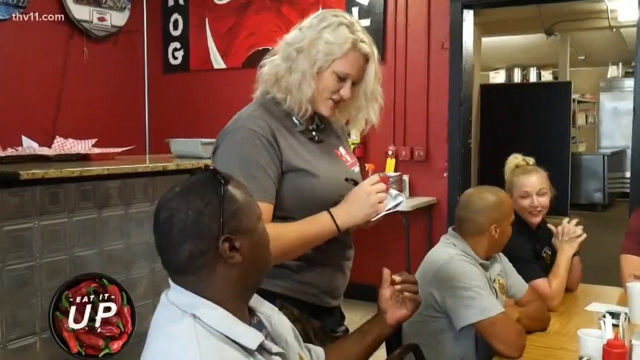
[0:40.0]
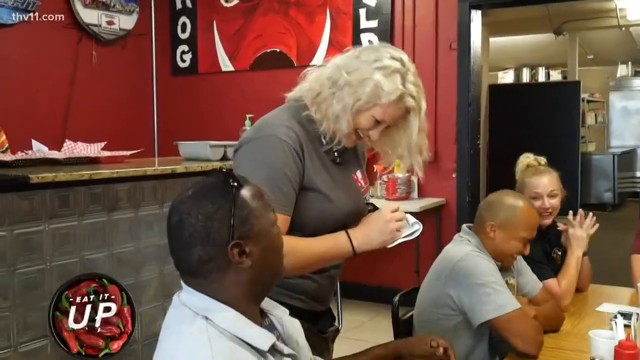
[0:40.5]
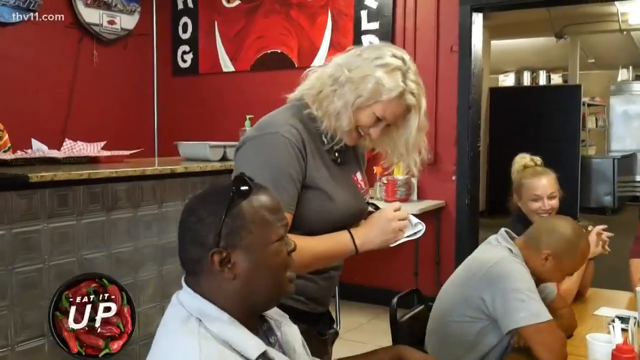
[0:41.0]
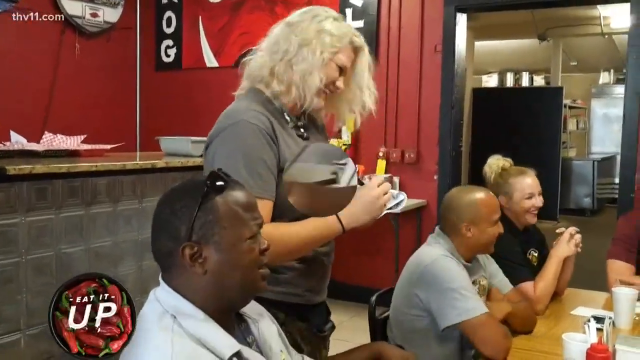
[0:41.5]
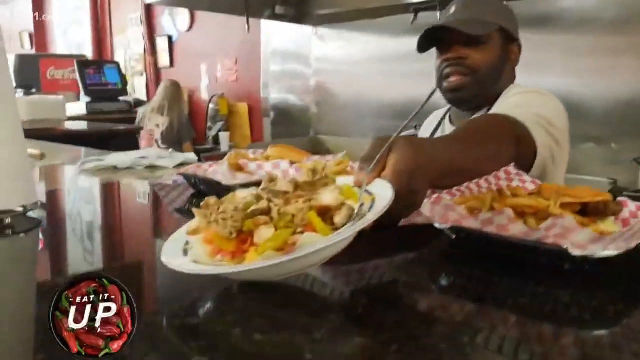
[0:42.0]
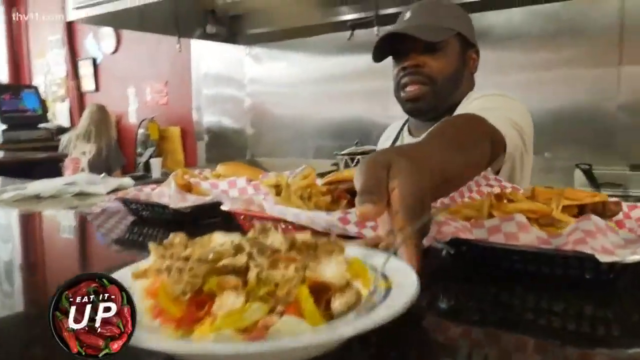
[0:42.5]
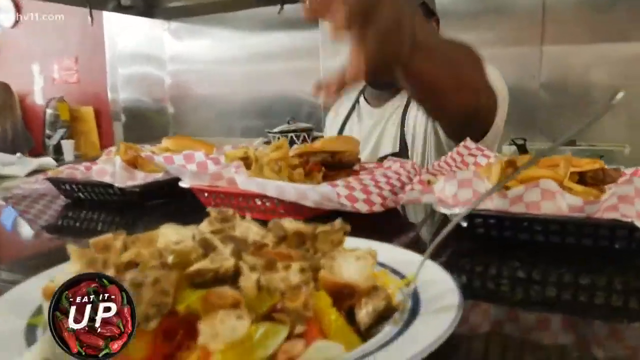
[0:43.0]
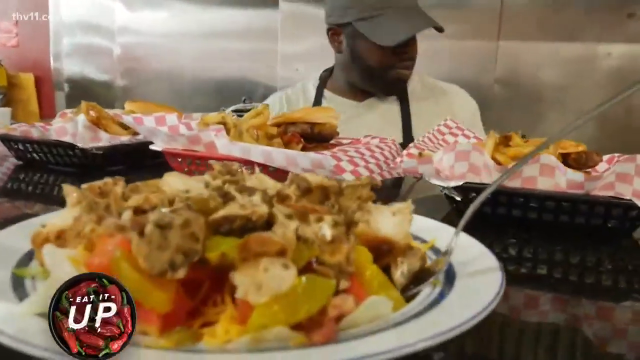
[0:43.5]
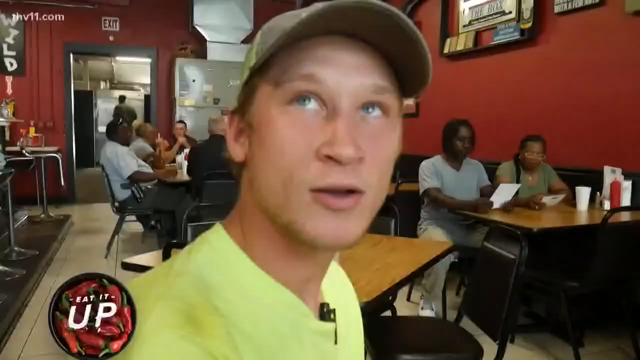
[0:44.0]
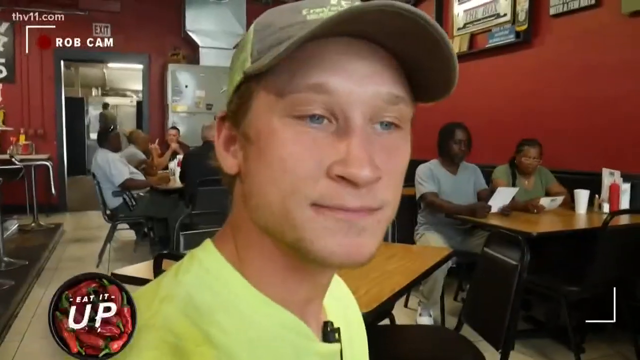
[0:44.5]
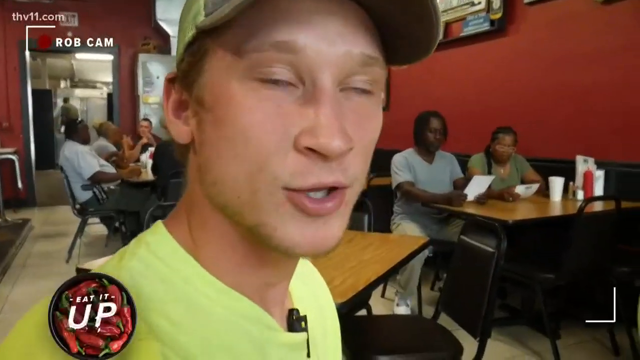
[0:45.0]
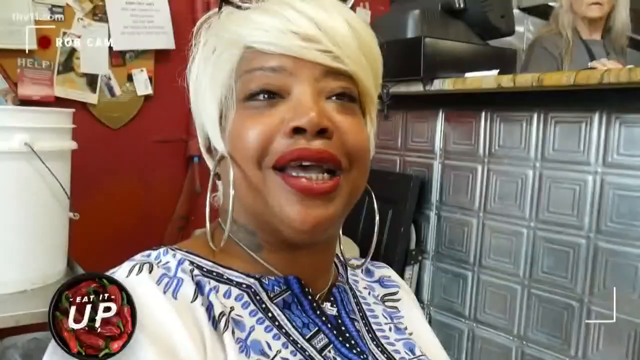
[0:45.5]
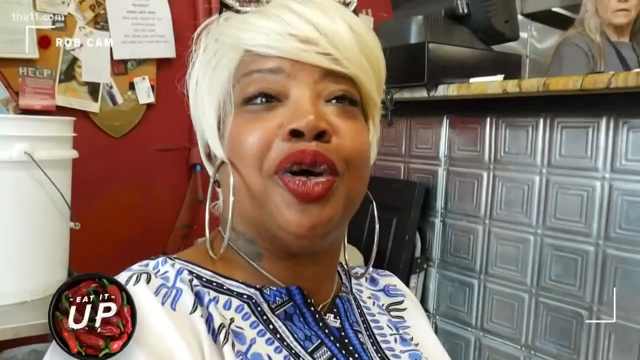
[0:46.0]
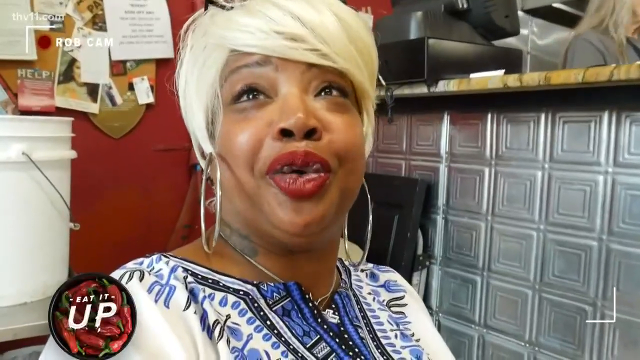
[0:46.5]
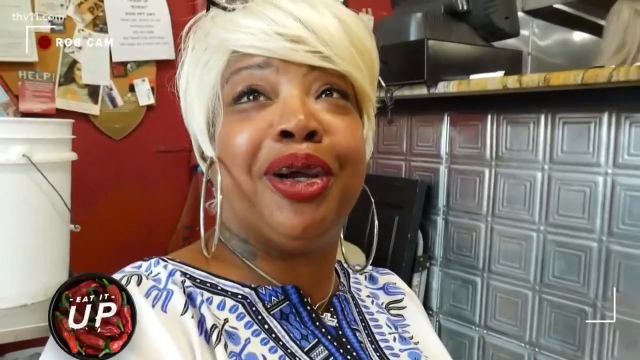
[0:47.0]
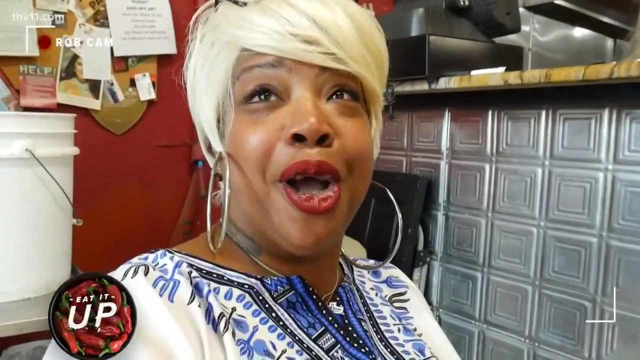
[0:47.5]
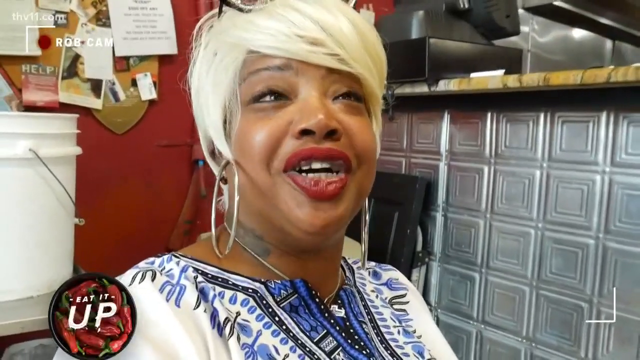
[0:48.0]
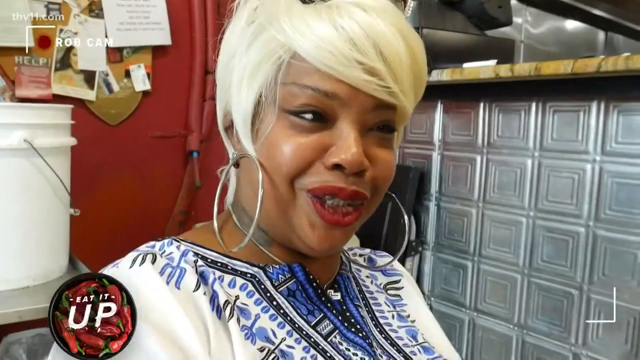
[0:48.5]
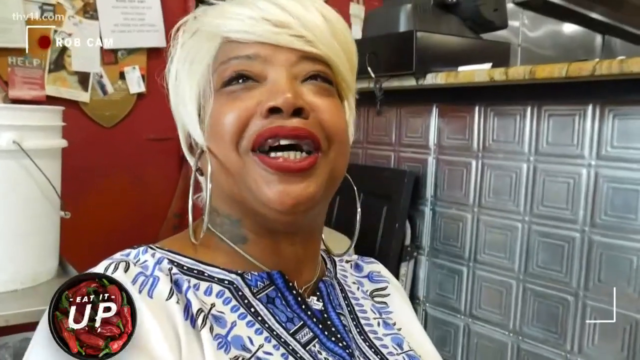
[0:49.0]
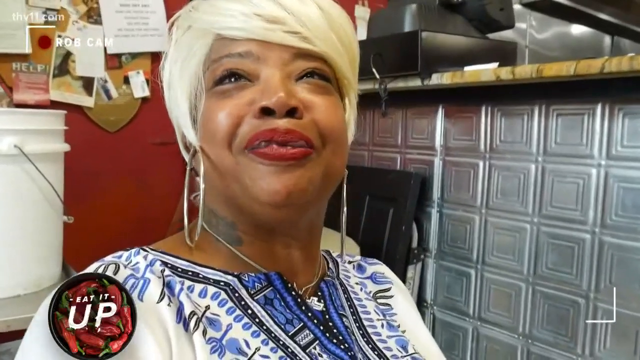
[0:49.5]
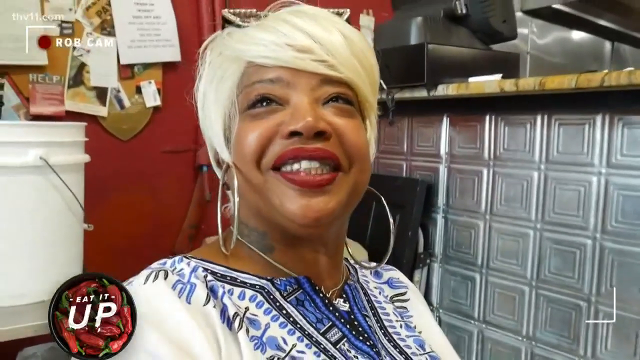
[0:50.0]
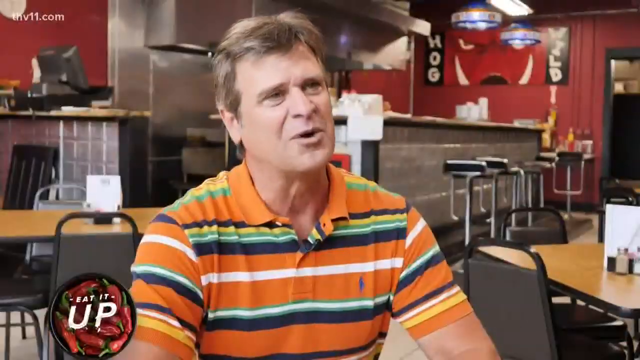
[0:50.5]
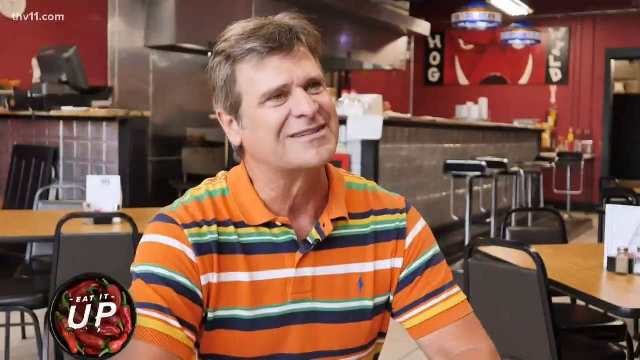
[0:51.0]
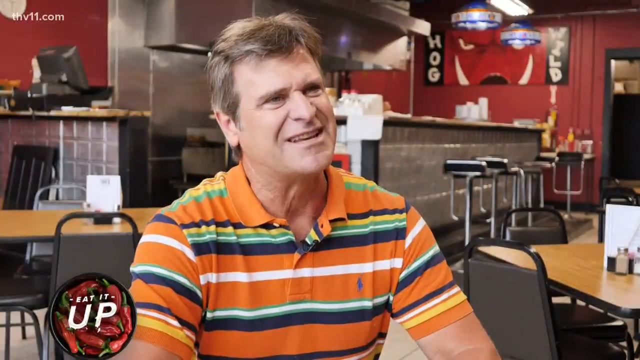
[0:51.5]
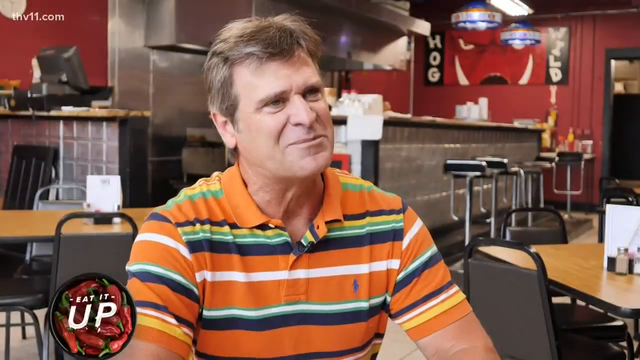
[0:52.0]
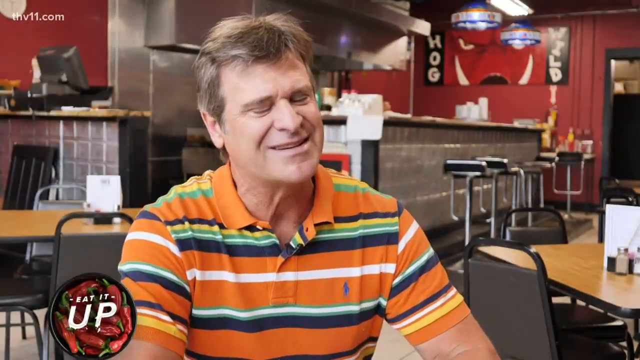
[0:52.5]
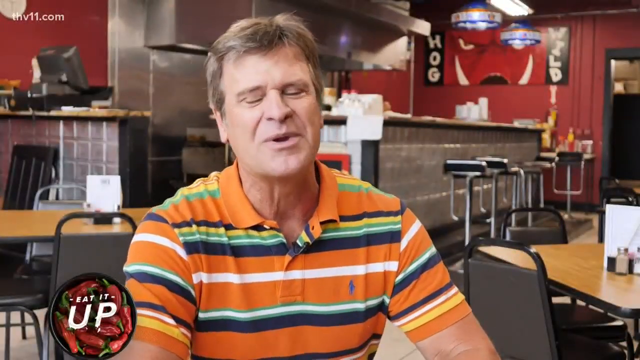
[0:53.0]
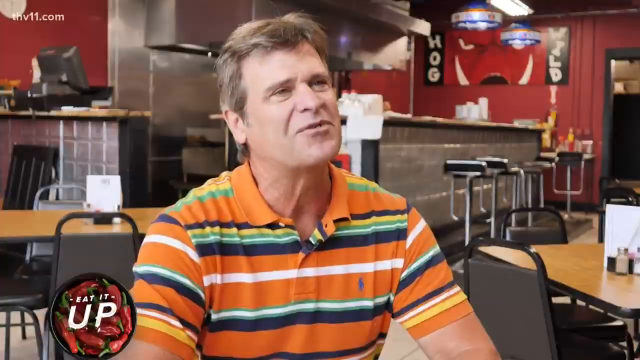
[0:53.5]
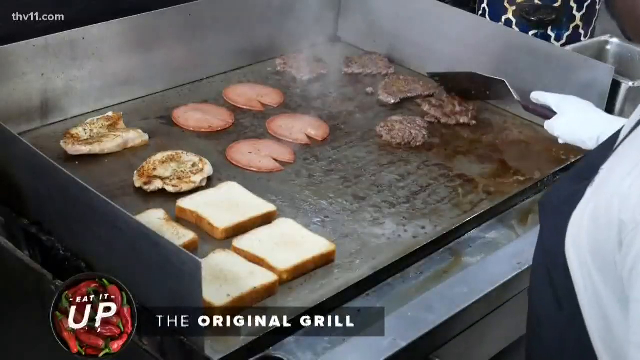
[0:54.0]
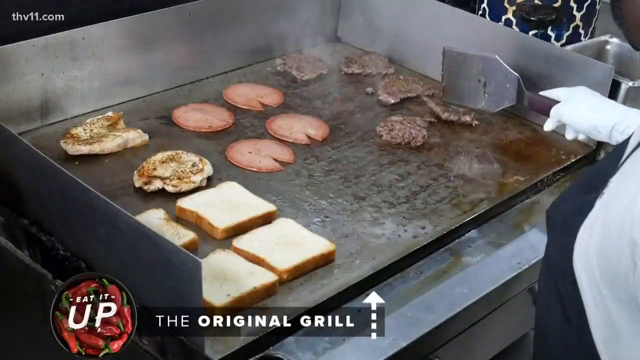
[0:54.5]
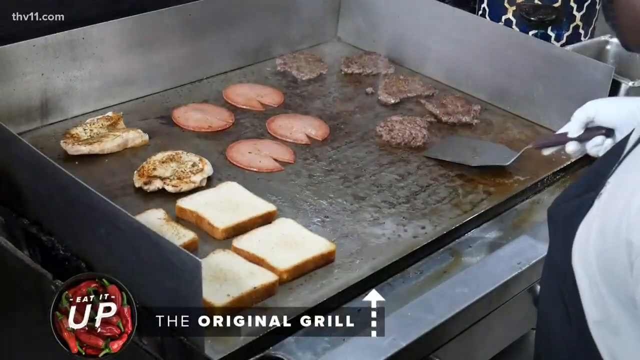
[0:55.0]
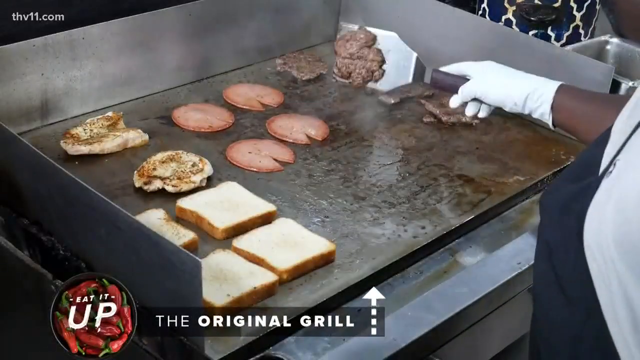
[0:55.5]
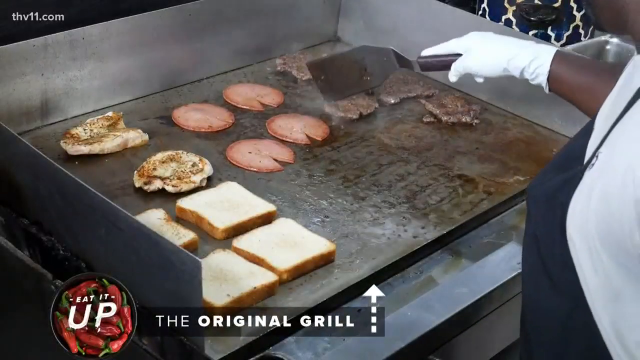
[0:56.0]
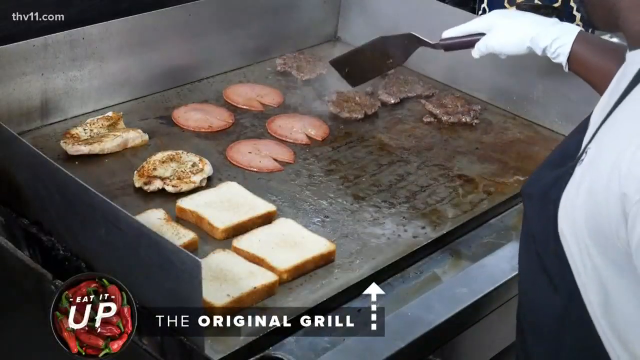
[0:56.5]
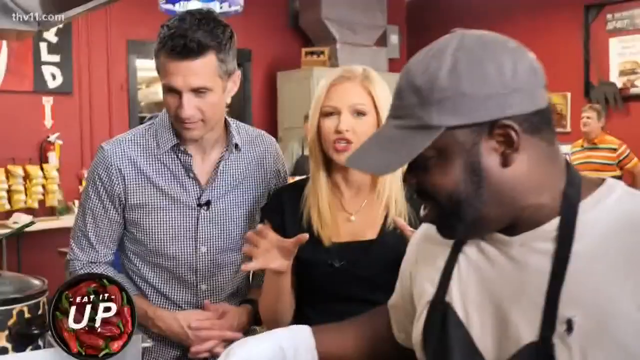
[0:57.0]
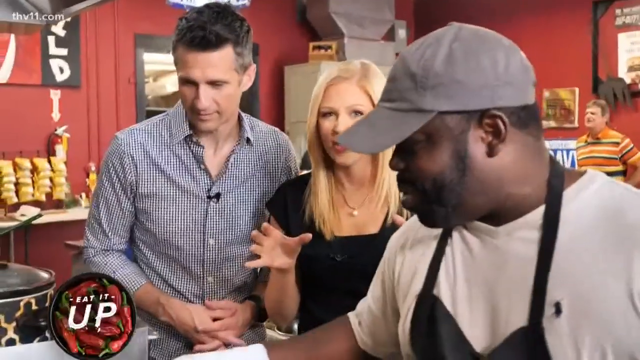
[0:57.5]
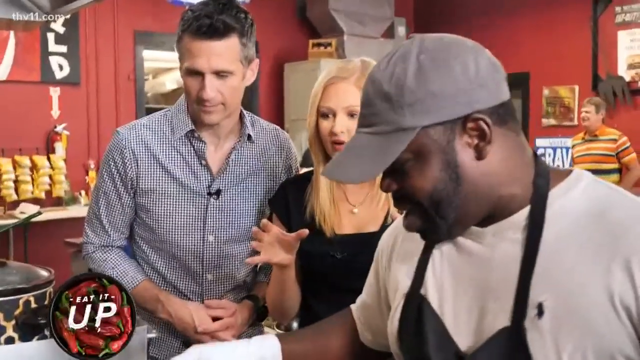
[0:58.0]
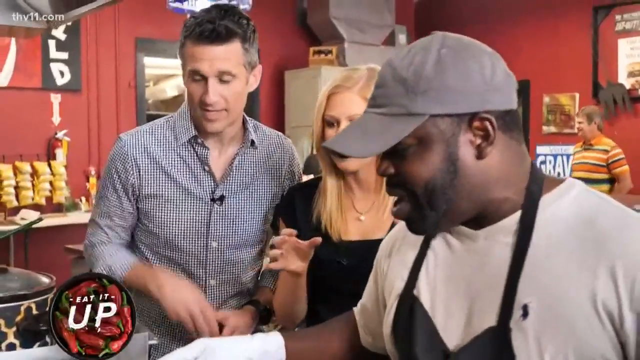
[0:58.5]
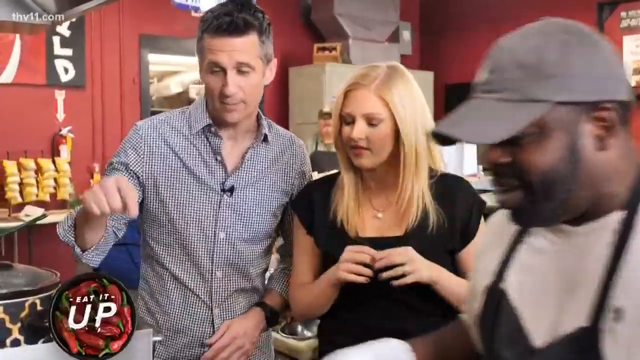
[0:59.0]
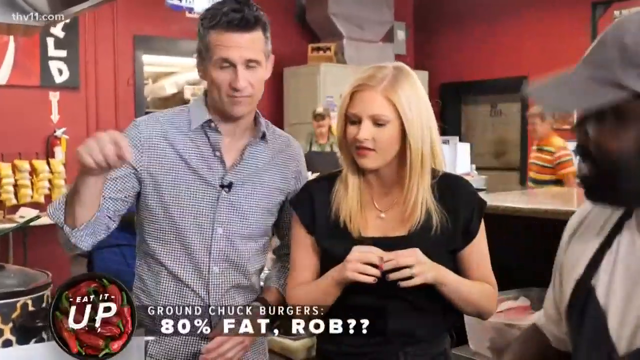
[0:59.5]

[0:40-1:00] Clients are shown, and the camera shifts to the kitchen where the chef is preparing food; there are chips on a plate. The clients appear to be interviewed. Kelly, the owner, sits in the restaurant and talks. The camera goes back to the kitchen, where the chef is making patties. A chef wearing a cap passes over a plate full of chips. The YouTubers Rob and Amanda then talk to the chef, possibly interviewing him. The waitress taking orders has blonde hair and a gray T-shirt with the restaurant's logo and name; she holds a pen and a book in her hands and apparently writes down the clients' orders.